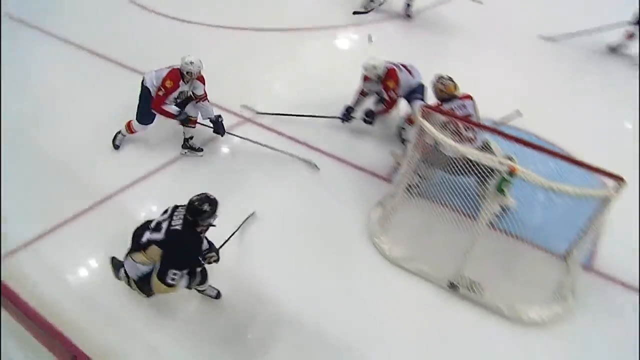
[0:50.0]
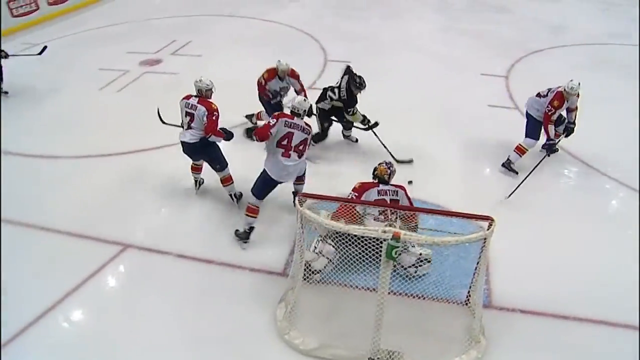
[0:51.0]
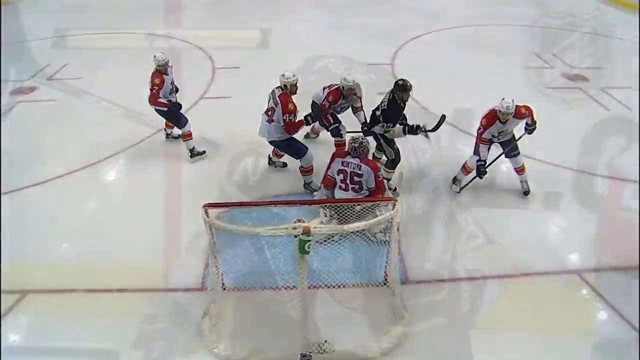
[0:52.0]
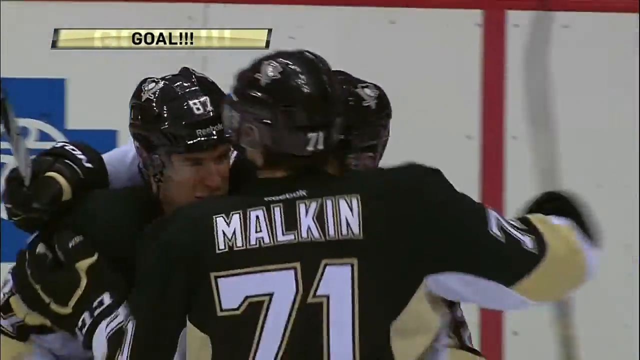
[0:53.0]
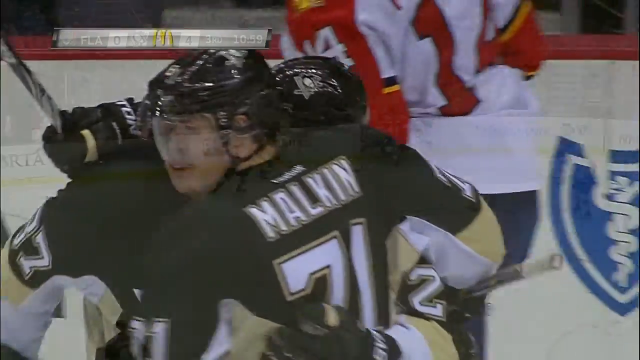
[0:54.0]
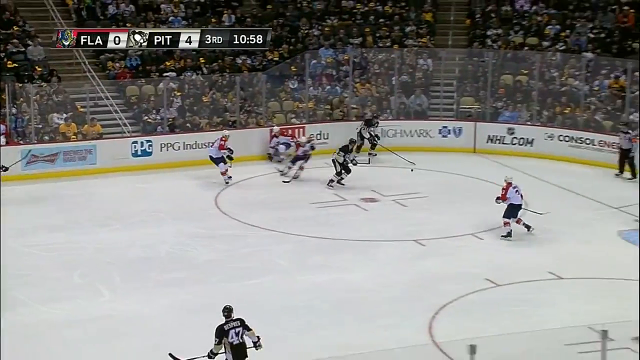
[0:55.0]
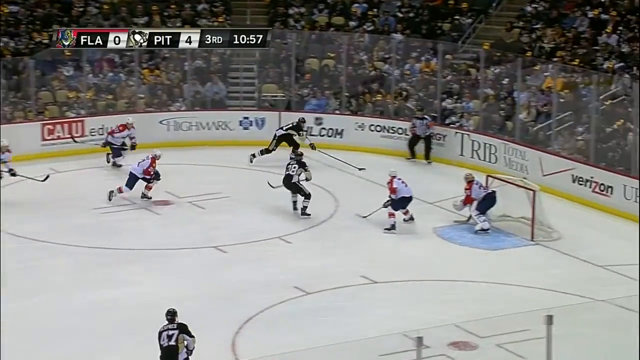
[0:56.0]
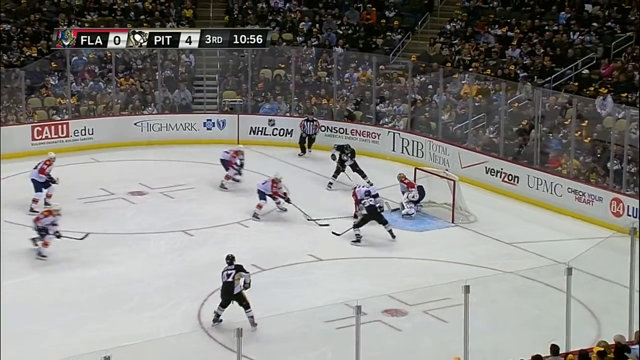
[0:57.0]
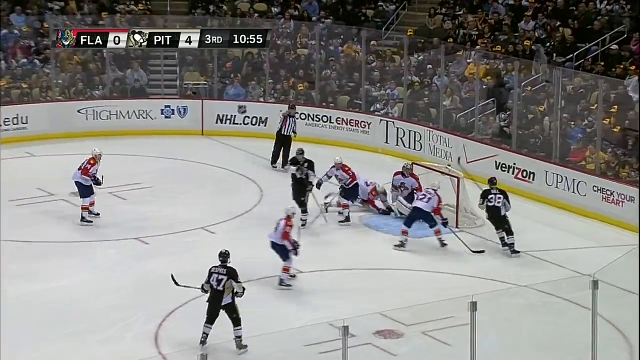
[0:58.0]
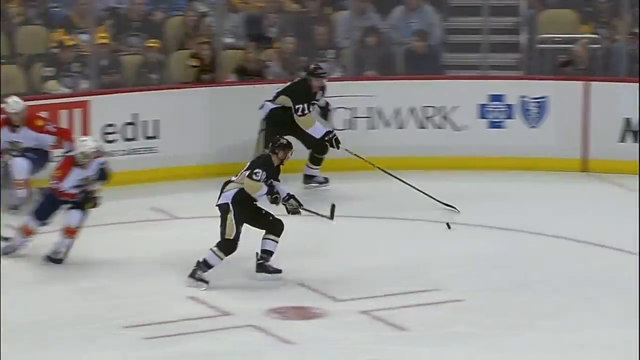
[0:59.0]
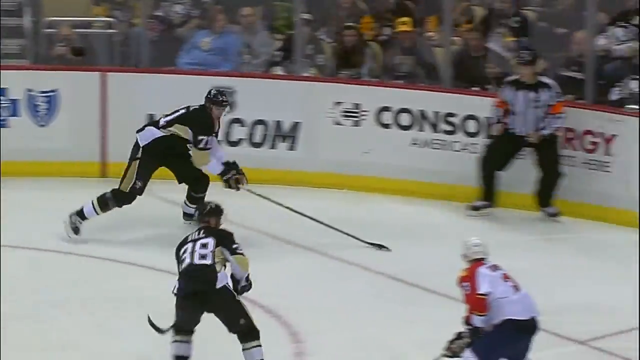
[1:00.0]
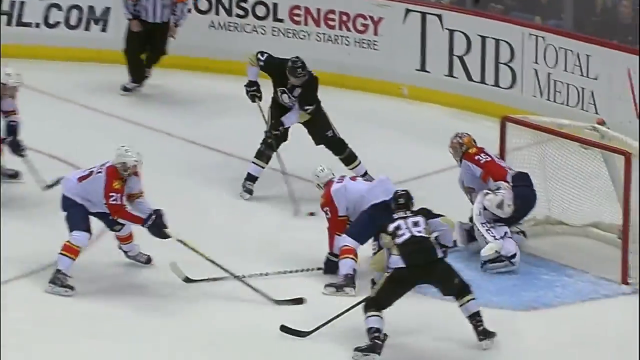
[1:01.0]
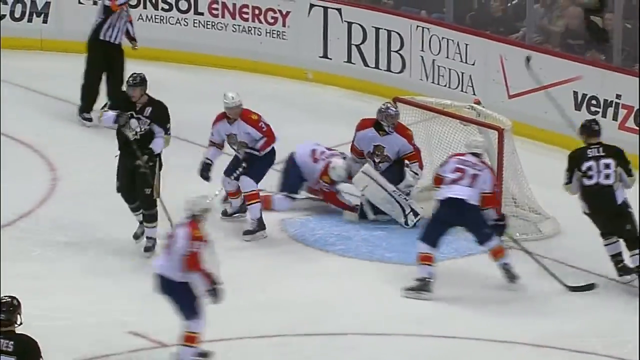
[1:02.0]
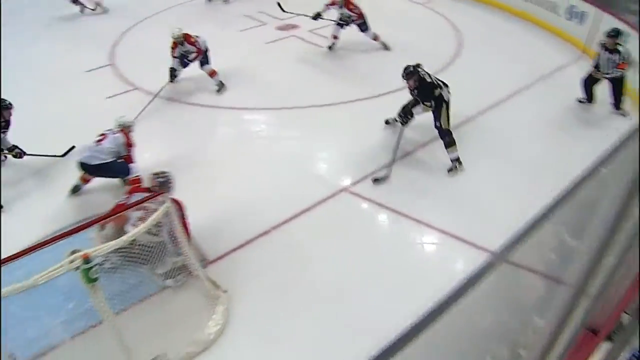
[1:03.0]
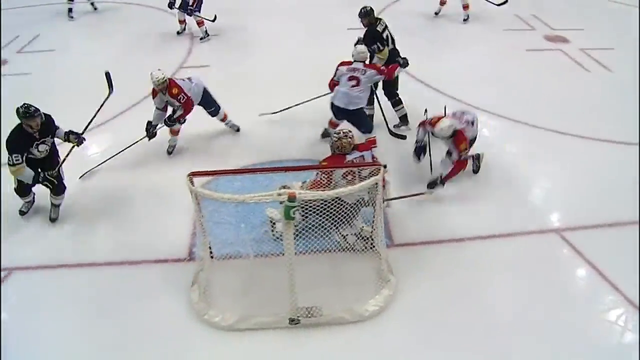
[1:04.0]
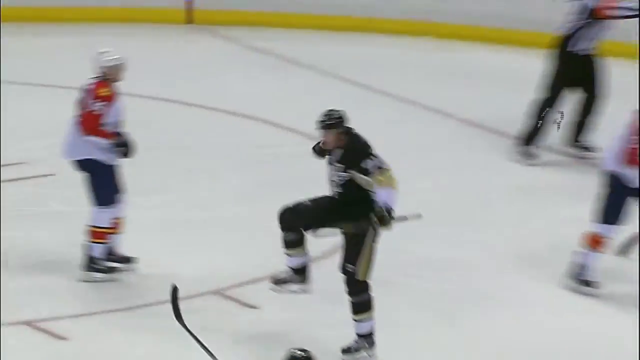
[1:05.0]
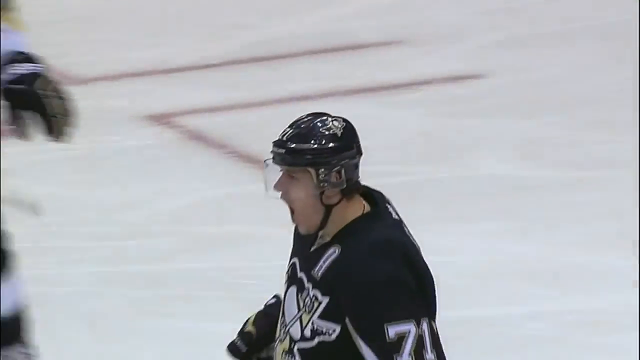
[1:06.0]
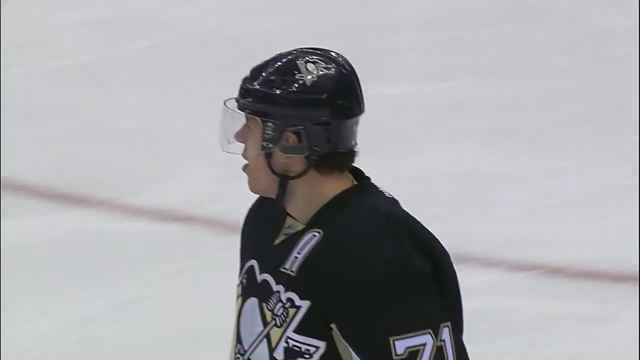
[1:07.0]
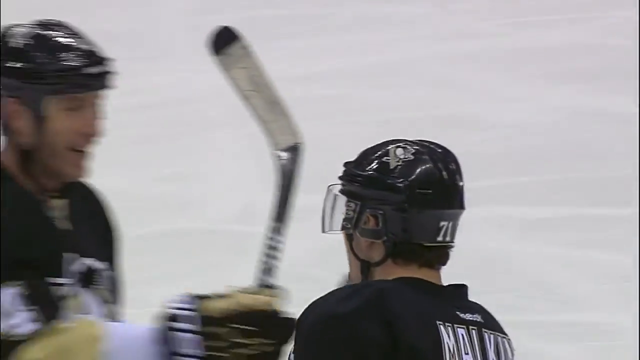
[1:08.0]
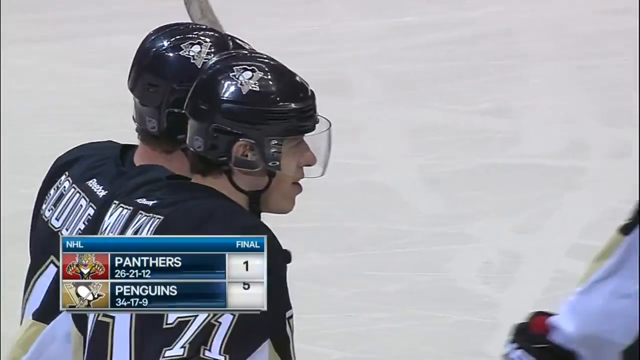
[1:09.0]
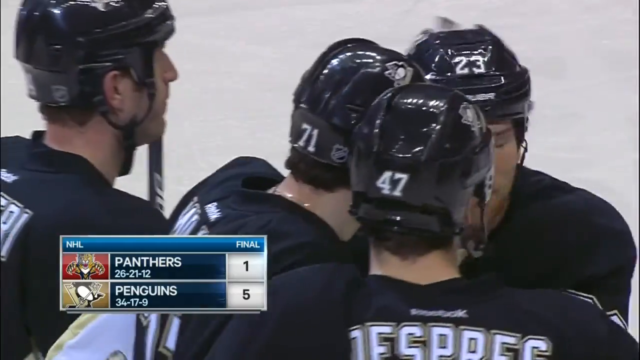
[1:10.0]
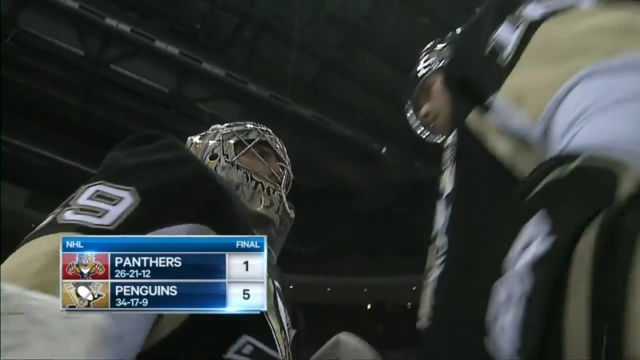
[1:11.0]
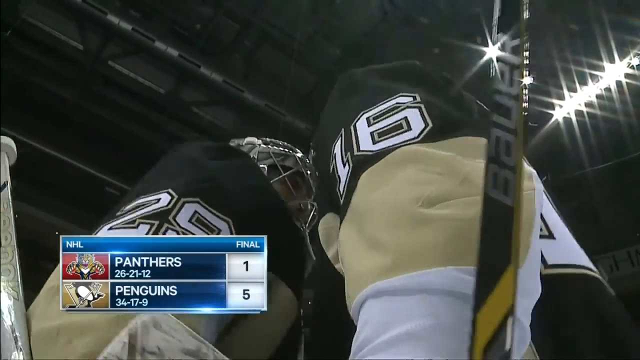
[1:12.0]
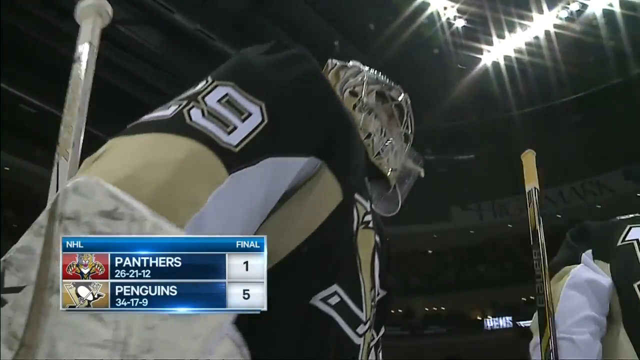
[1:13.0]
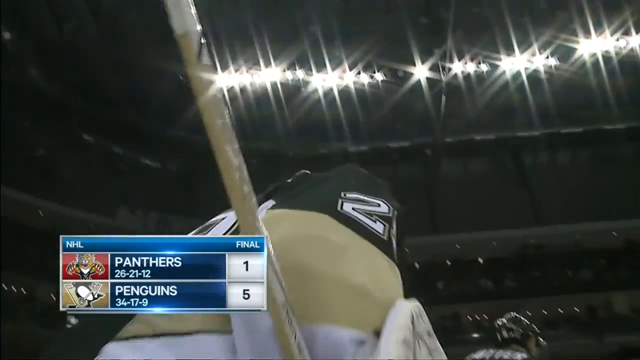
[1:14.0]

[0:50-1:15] Two players hug each other after scoring against the other team, and another player, wearing black and grey, is seen supporting the goal he has just scored; all of them are happy about the goal. The white ground is marked with red circles with triangles inside them. Some players fight for the ball while others celebrate. The ground is fully packed with people watching the game, and there is a logo at the centre. A player just misses the ball, and the keeper is astounded. The players run around the ground, skating in their shoes; the ground is slippery, so they slide along it, and their shoes glide easily.